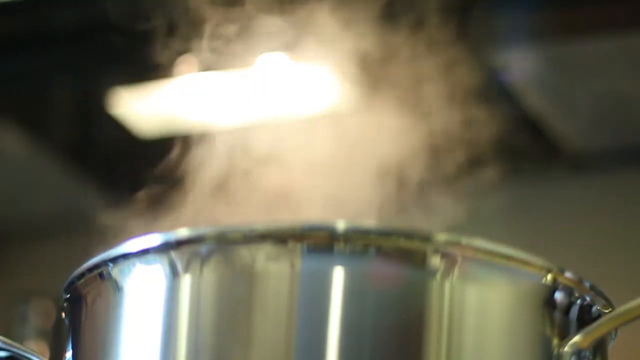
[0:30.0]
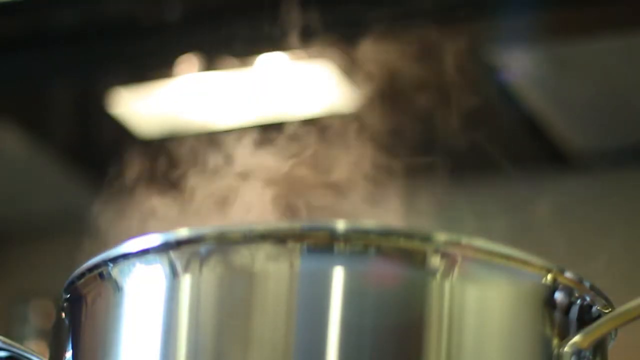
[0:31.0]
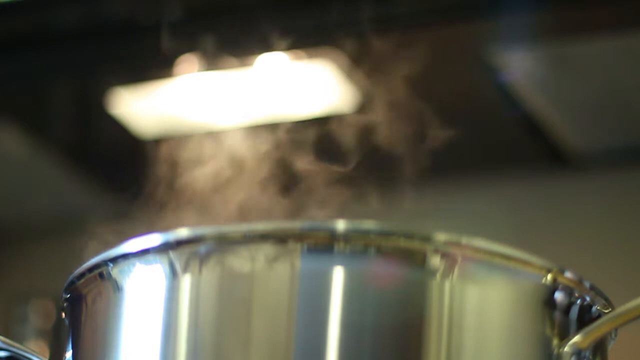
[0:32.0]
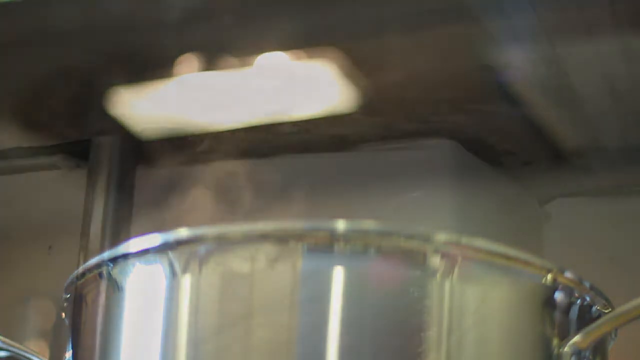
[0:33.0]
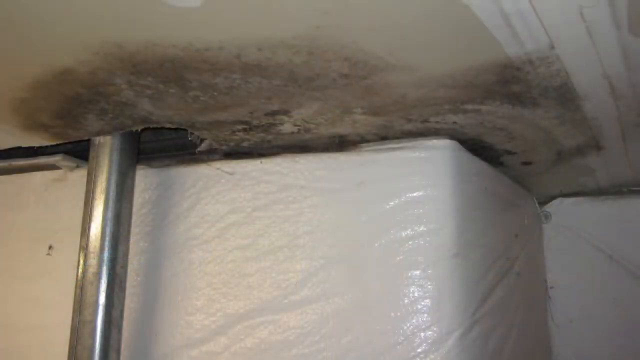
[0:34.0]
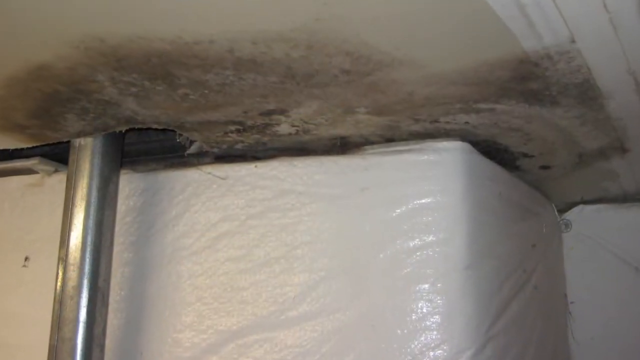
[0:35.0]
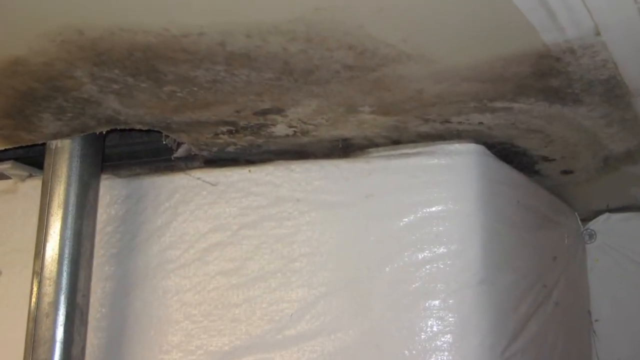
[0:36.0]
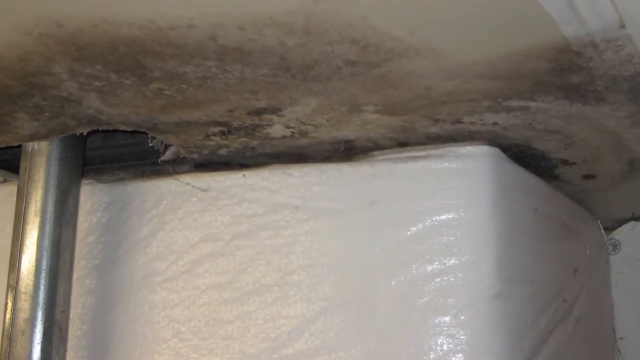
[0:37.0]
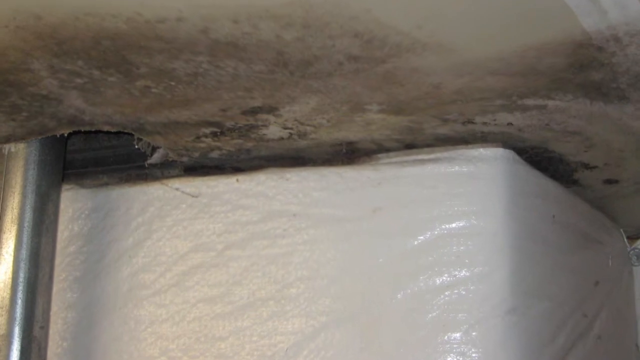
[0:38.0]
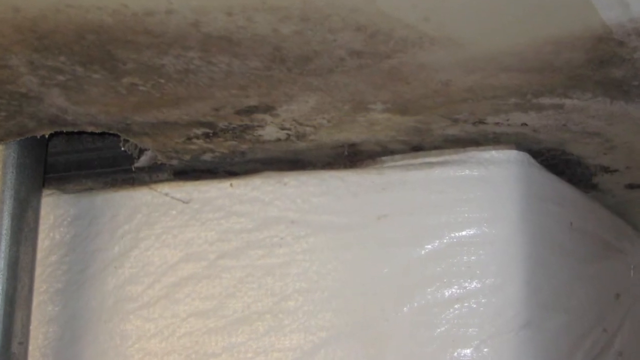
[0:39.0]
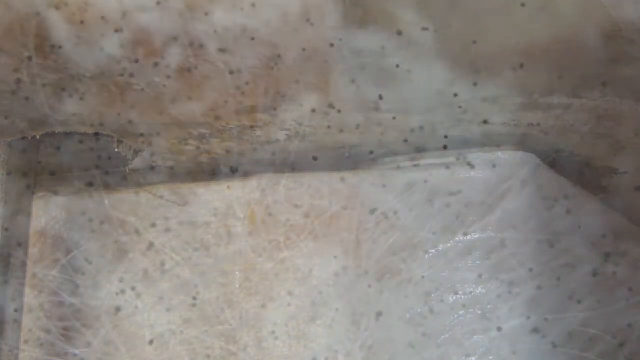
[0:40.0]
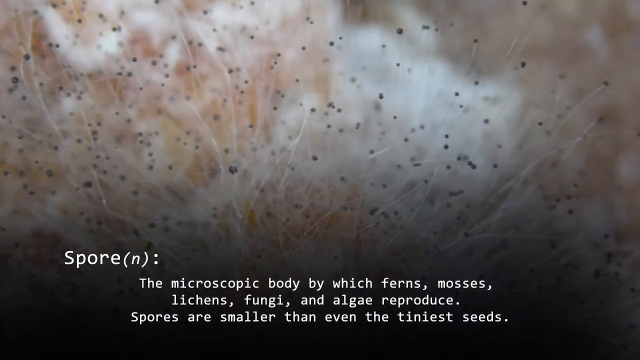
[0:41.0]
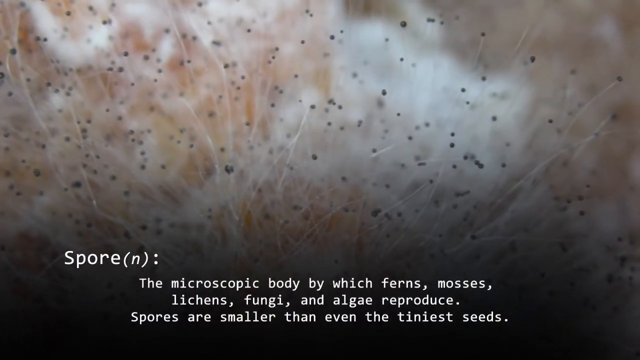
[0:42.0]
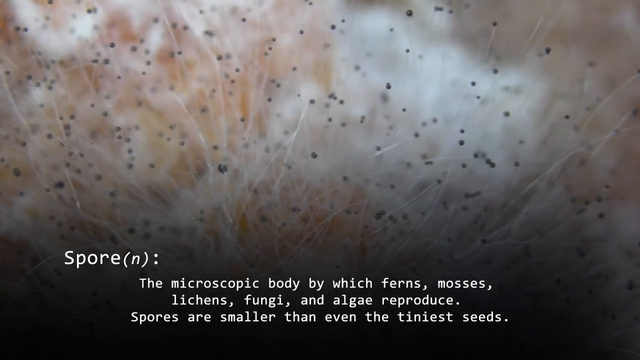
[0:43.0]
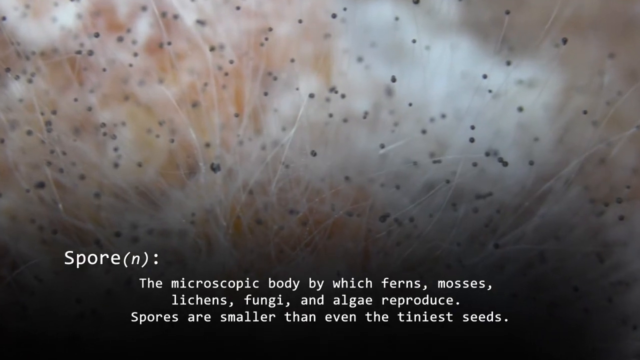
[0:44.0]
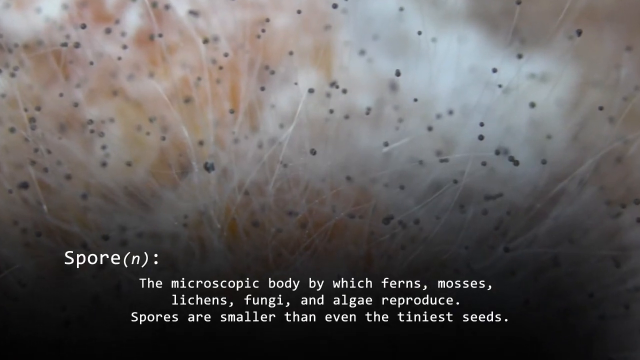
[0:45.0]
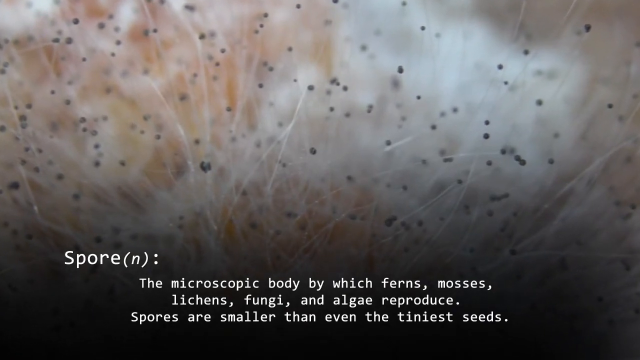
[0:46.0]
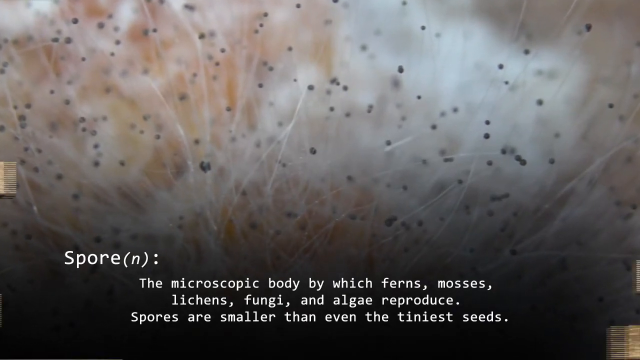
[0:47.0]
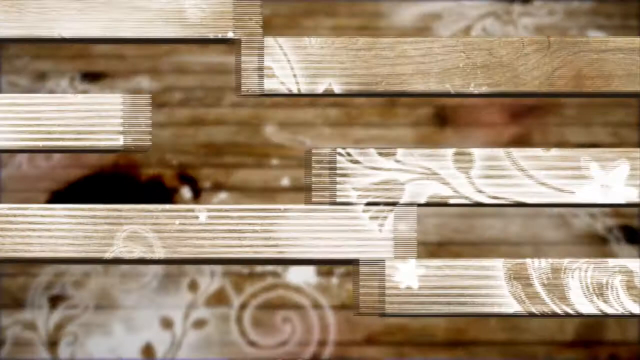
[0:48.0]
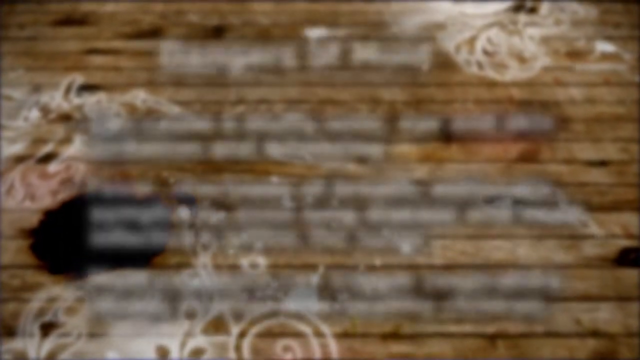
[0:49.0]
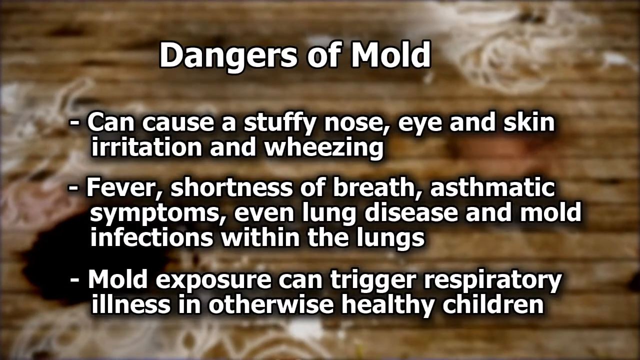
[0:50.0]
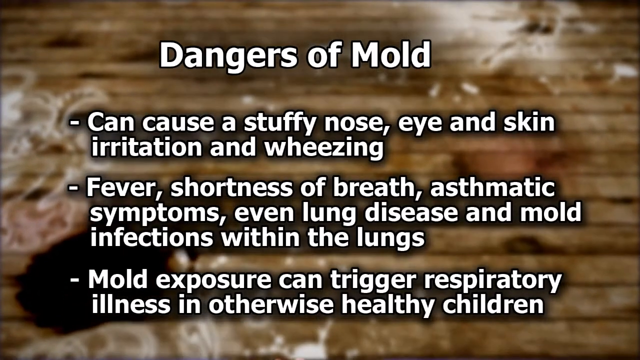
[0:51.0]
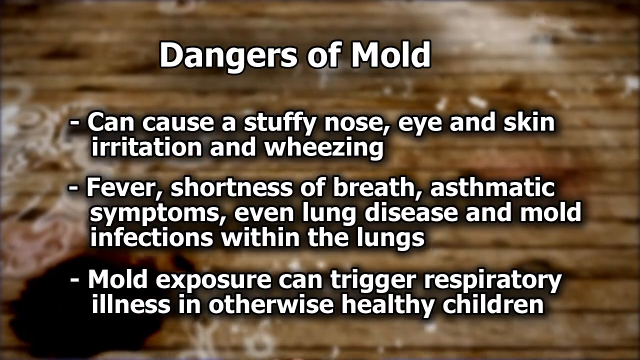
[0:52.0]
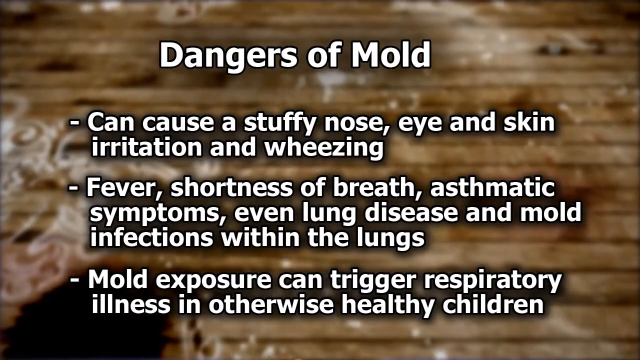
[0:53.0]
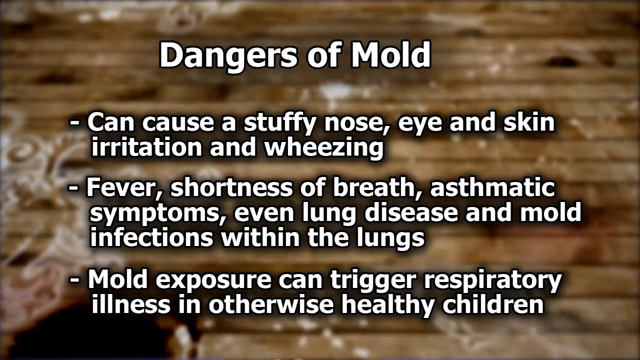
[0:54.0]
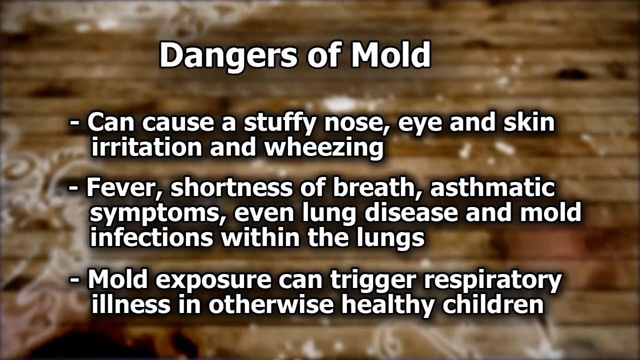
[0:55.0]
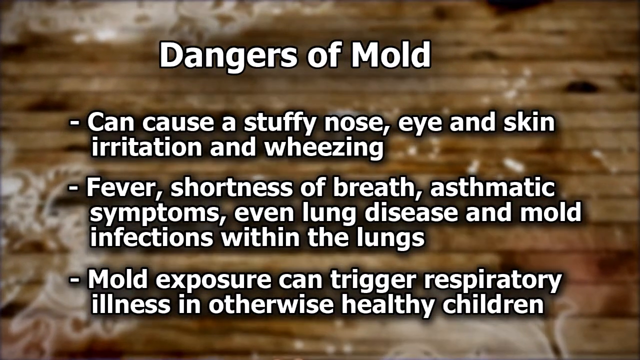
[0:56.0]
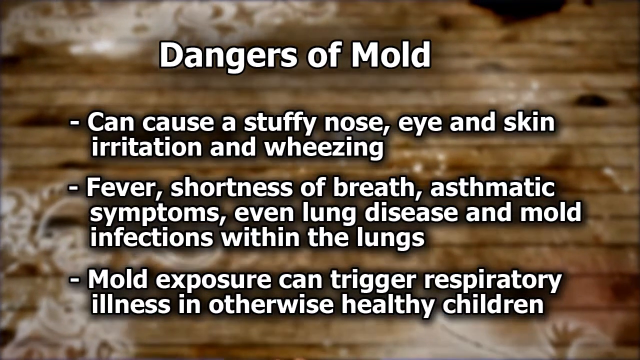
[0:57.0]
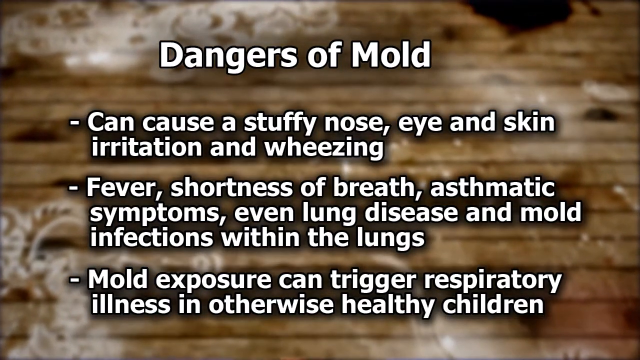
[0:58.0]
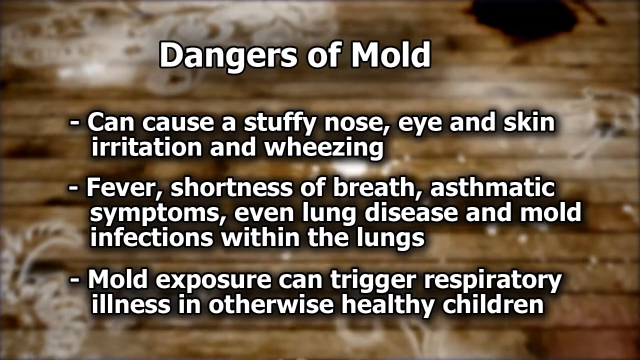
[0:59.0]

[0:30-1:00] Water boils in a pot with steam coming out of it. The video cuts to a ceiling covered in black mold that looks like it is badly damaging the ceiling, most likely as a result of steam from the pan over time. A screen of text then reads "Spore. The microscopic body by which ferns, mosses, lichens, fungi and algae reproduce. Spores are smaller than even the tiniest seeds." Next comes a very zoomed-in picture of what seems to be many white strands, each with a little blackish-gray orb on its end, almost like poppy seeds and probably a large collection of spores; the image zooms in slightly. Gold and white designs come across the screen, and a new page of text reads "dangers of mold can cause a stuffy nose, eye, and skin irritation and wheezing, fever, shortness of breath, asthmatic symptoms, even lung disease and mold infections within the lungs. Mold exposure can trigger respiratory illness in otherwise healthy children." Behind the words is a golden design that looks like it could be little strands of bacteria or mold.